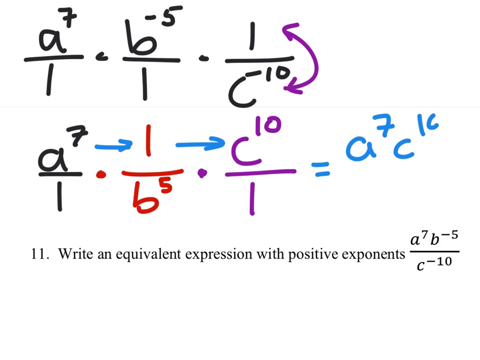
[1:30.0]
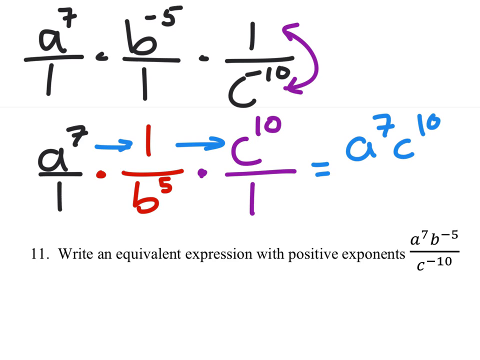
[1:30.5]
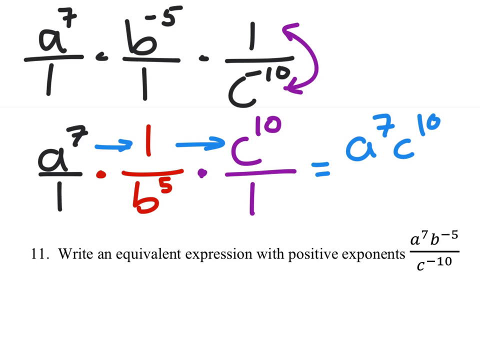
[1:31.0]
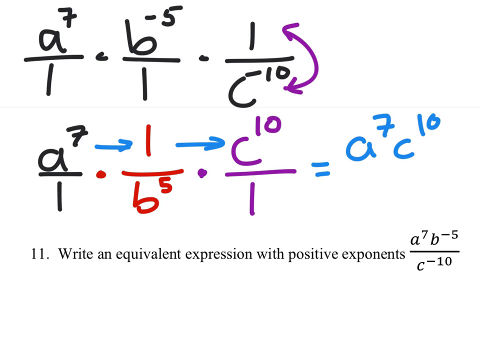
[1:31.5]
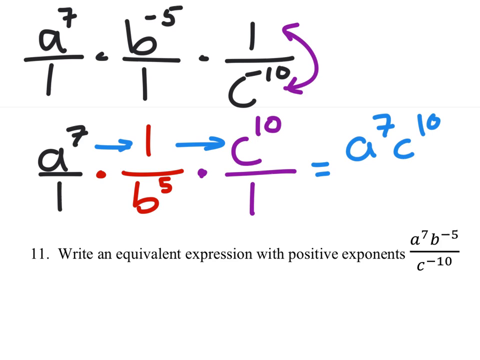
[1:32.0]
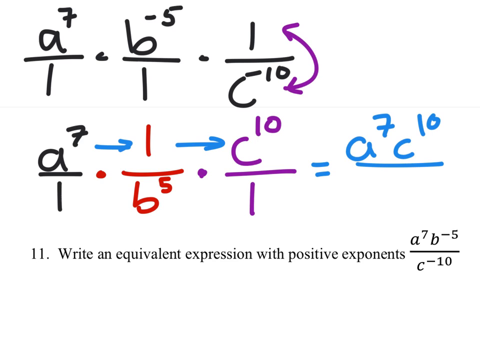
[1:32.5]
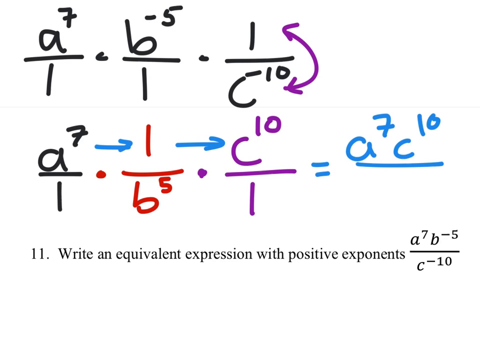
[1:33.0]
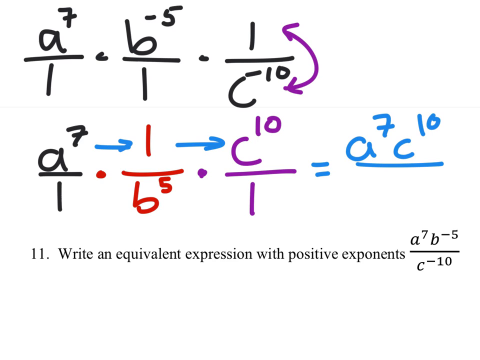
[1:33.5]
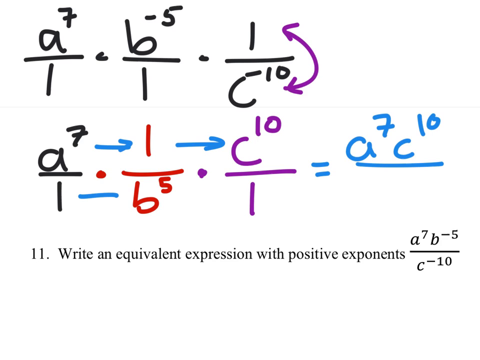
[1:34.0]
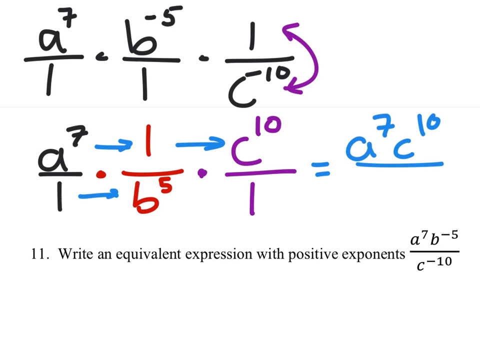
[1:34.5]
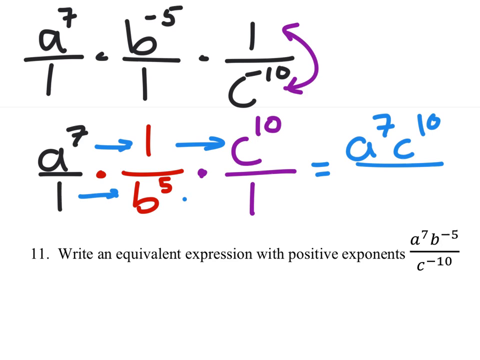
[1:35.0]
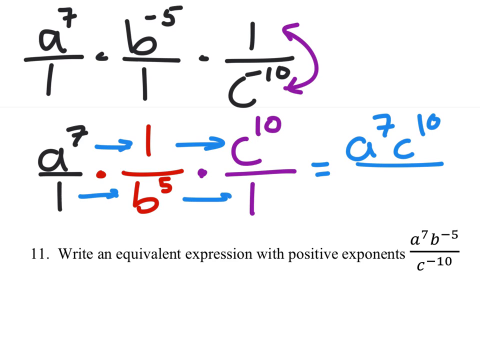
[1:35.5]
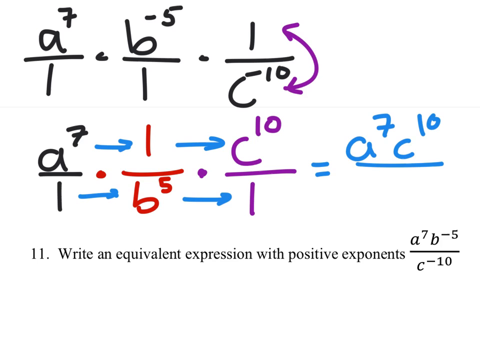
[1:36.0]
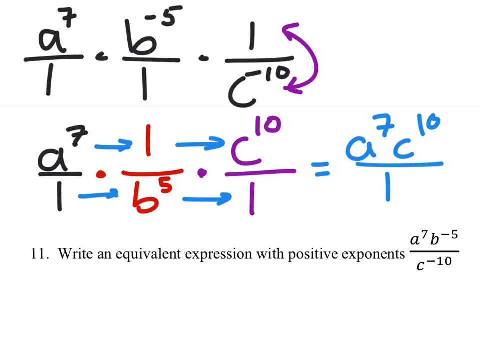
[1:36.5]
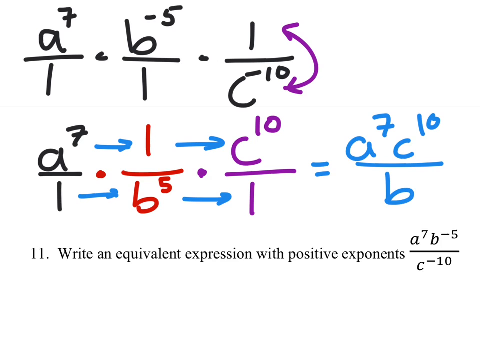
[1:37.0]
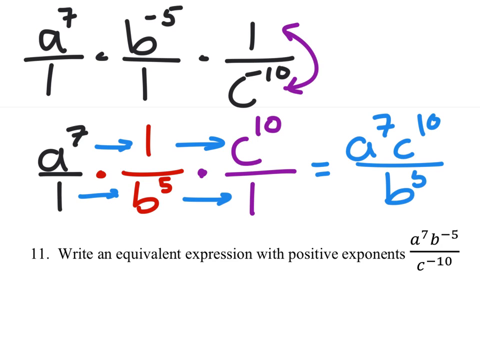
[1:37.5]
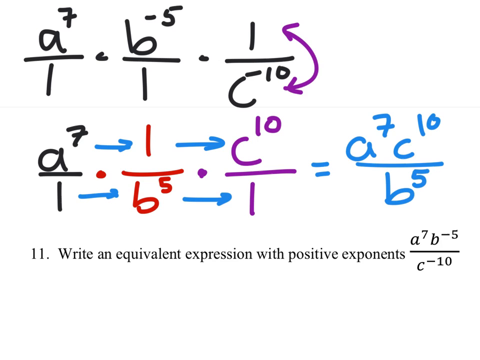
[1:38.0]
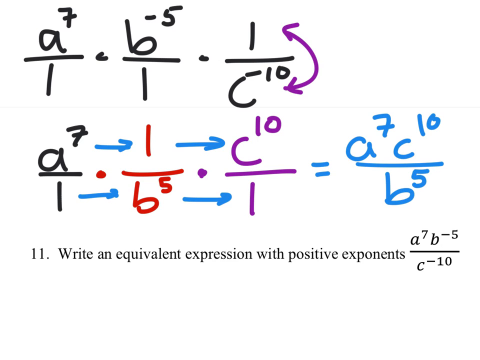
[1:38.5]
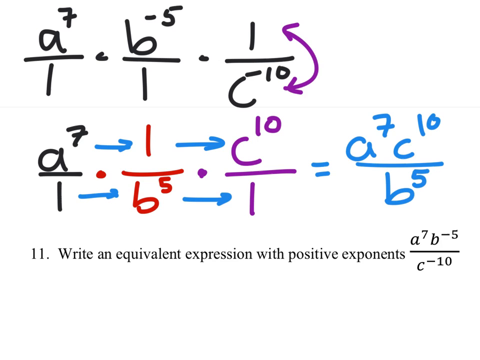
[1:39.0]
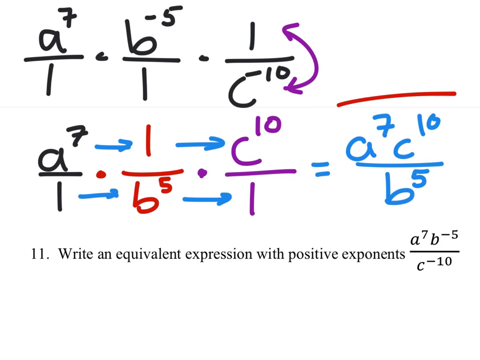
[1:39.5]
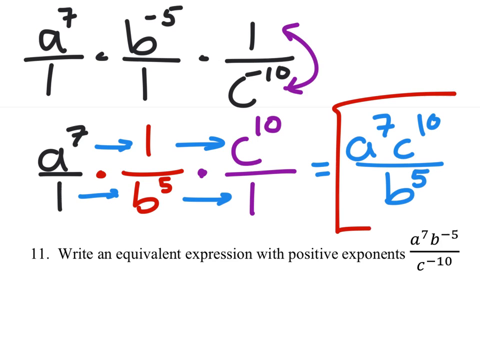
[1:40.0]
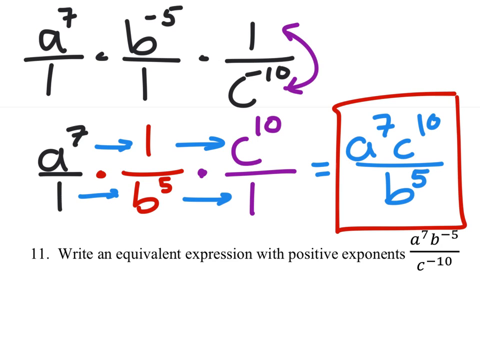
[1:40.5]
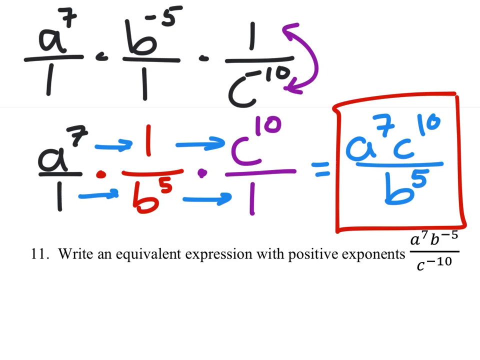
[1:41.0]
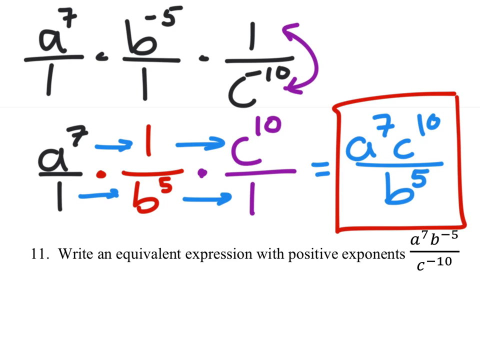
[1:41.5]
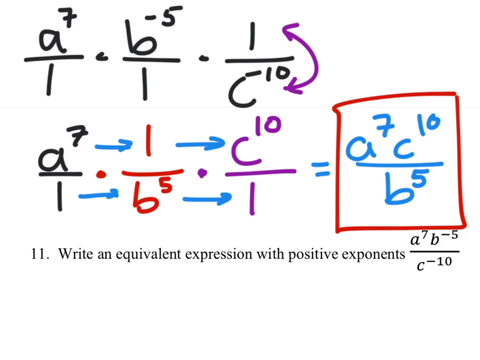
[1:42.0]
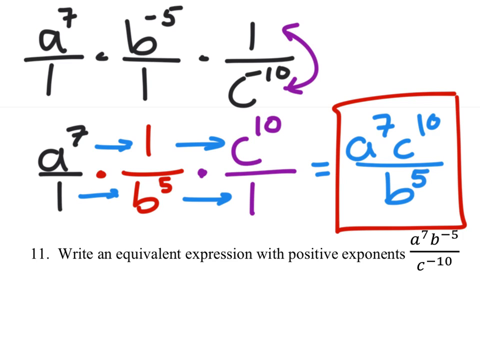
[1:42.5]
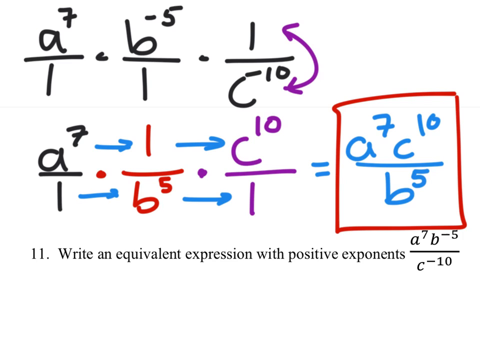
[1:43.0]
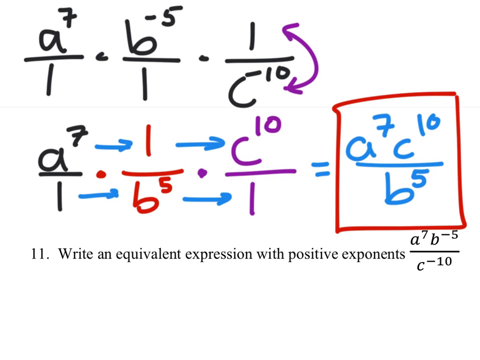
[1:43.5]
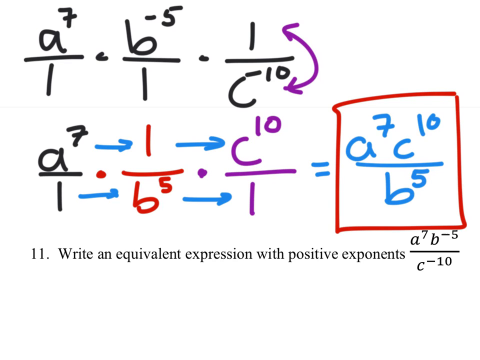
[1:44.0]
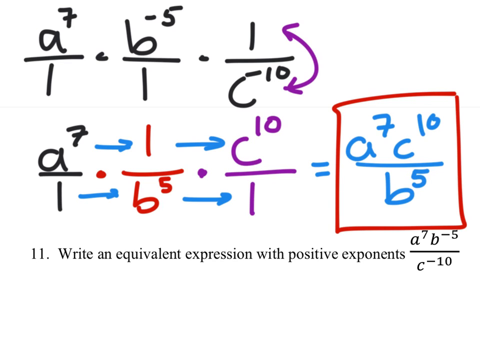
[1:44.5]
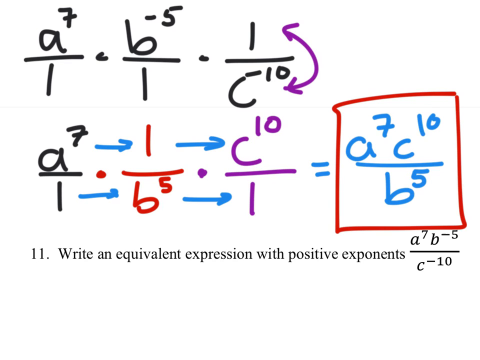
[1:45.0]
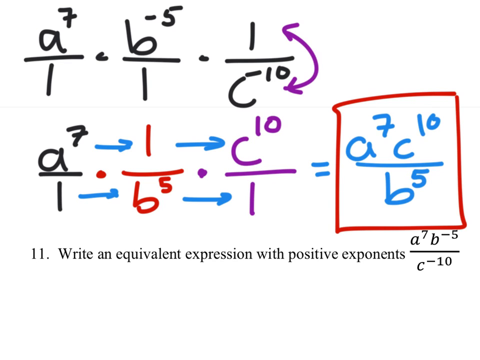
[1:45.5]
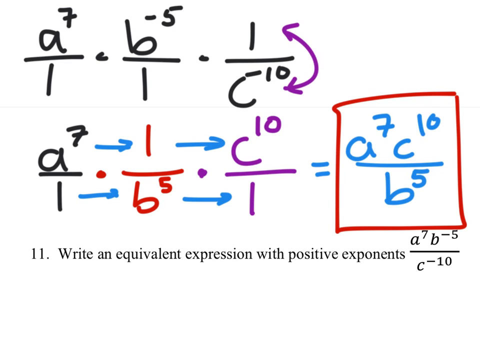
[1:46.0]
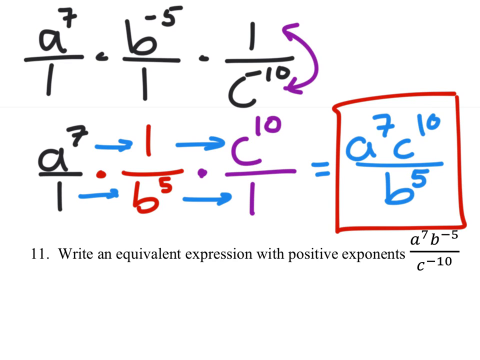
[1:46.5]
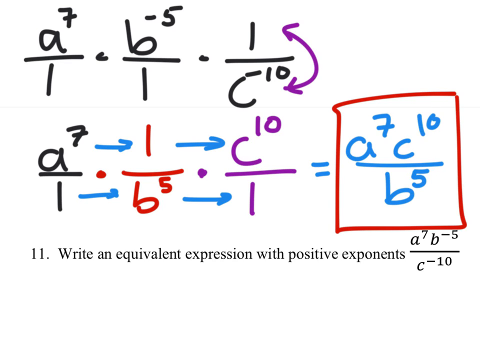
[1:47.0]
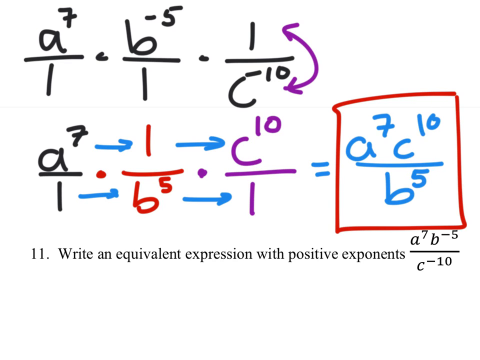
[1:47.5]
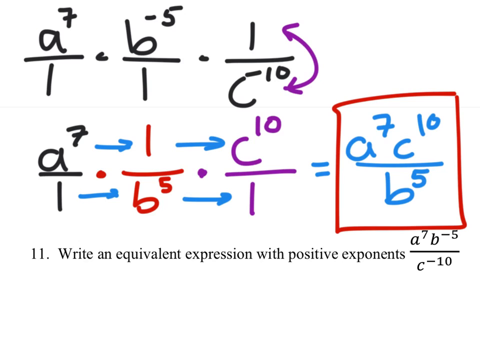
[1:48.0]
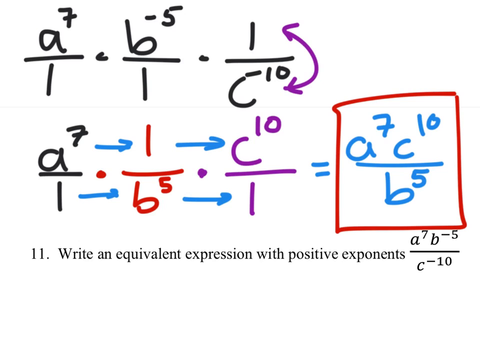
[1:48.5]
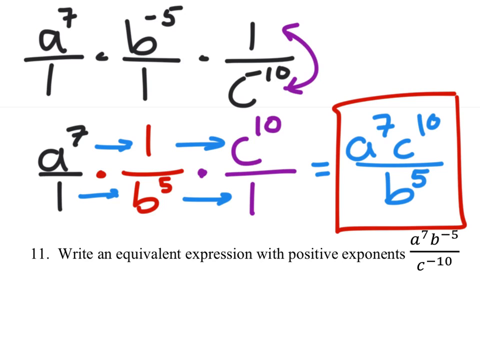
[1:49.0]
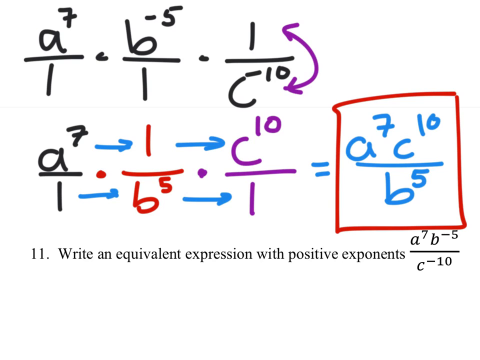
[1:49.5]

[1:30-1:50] A light blue marking pen adds more writing. It draws arrows from a to the exponent 7 divided by 1, an arrow in the middle, and from 1 divided by b to the exponent 5, plus an arrow on top of the purple dot. Next to c to the exponent 10 divided by 1 is an equals sign, followed by a to the exponent 7 c to the exponent 10, written in blue, with a division line also in blue. Lower down, arrows are drawn on the lower part by the 1 and b, and b to the exponent 5 is written, all in blue marker. A box is then drawn around a to the exponent 7 c to the exponent 10 divided by b to the exponent 5, possibly to mark the final result of the calculation.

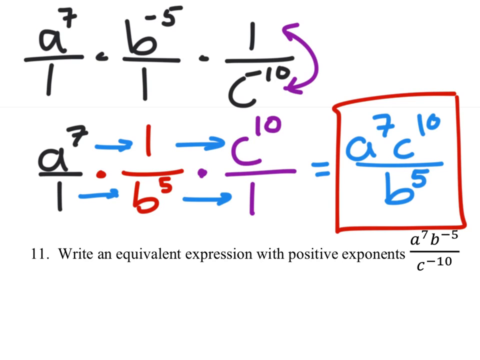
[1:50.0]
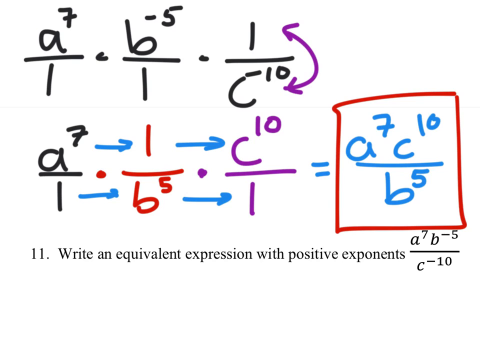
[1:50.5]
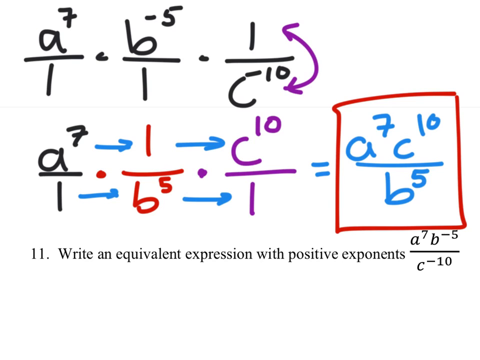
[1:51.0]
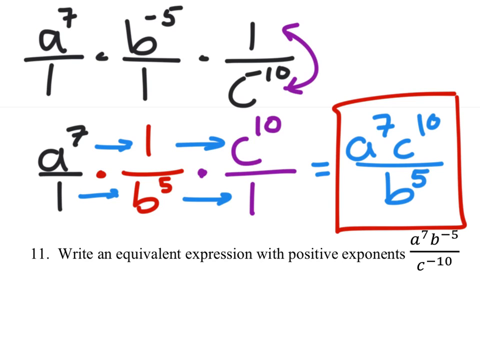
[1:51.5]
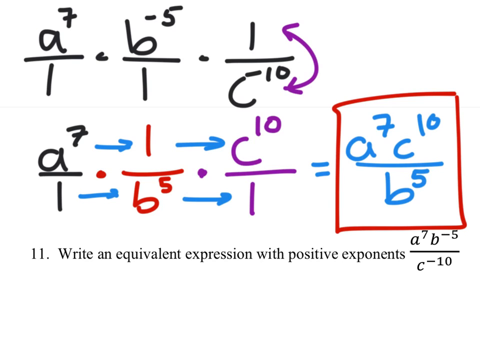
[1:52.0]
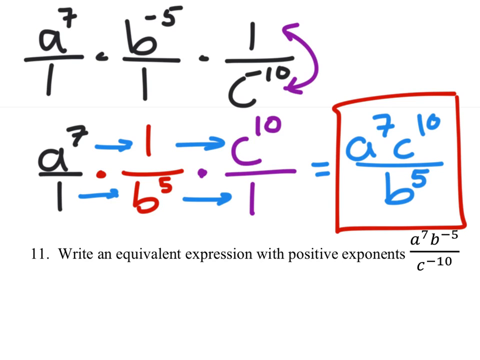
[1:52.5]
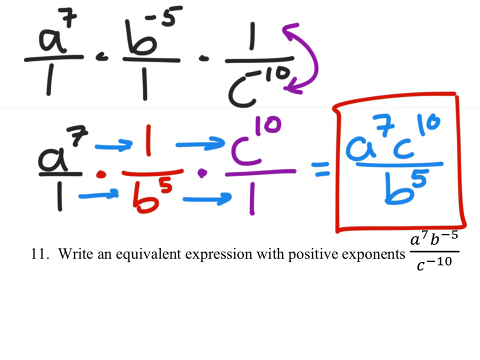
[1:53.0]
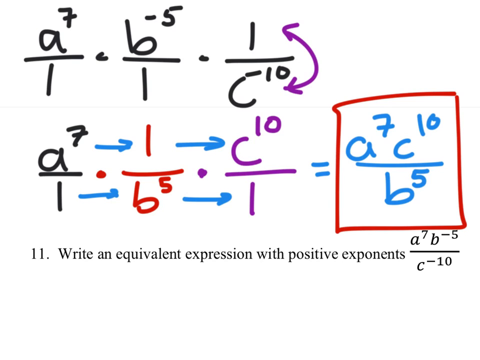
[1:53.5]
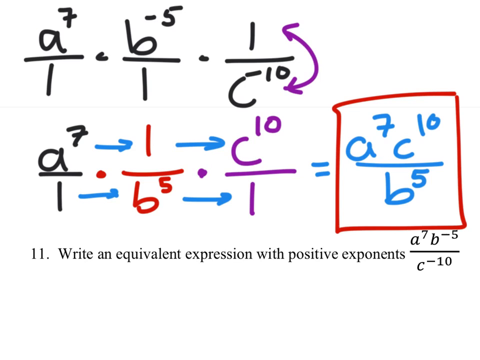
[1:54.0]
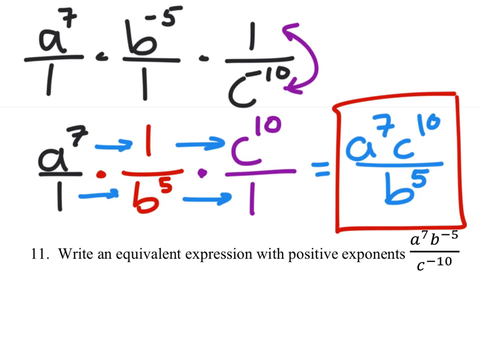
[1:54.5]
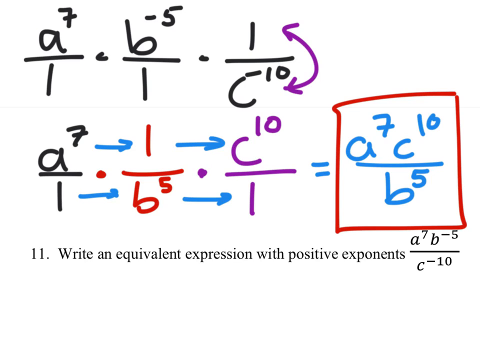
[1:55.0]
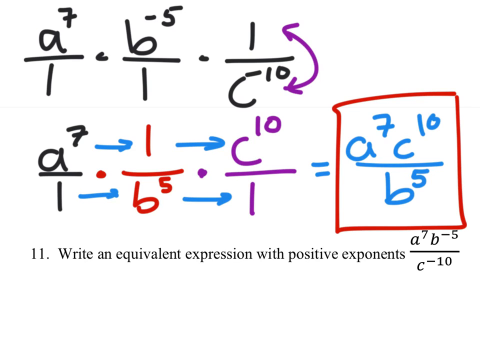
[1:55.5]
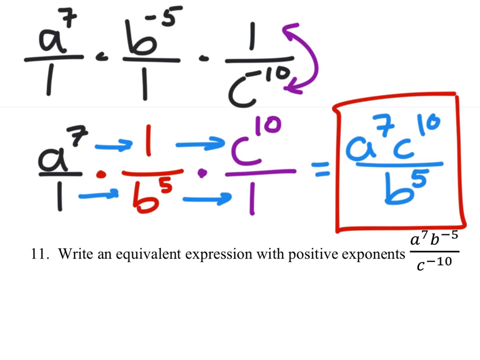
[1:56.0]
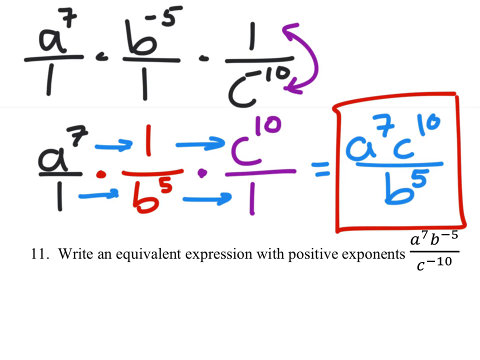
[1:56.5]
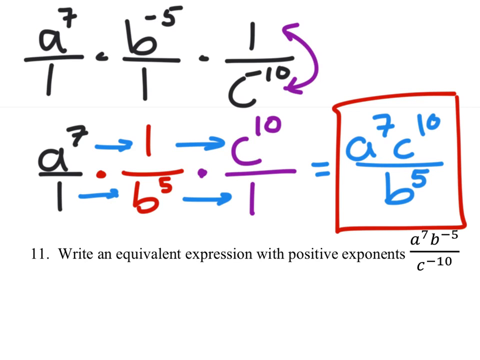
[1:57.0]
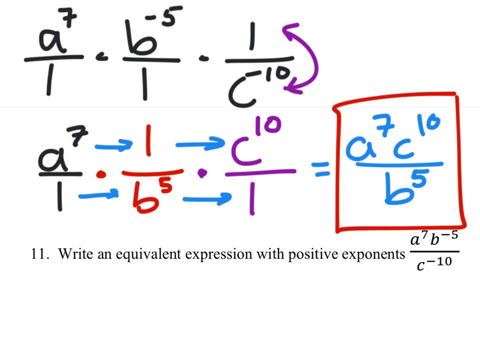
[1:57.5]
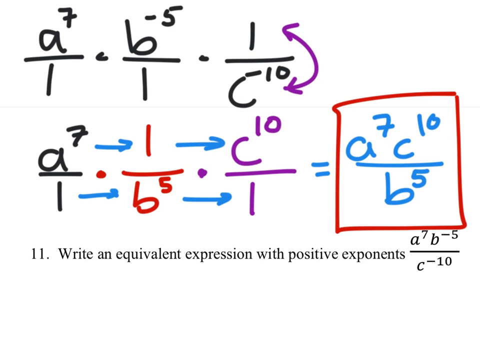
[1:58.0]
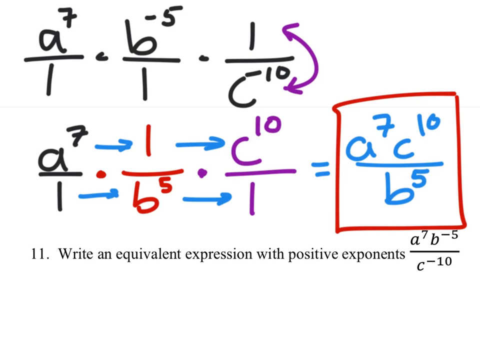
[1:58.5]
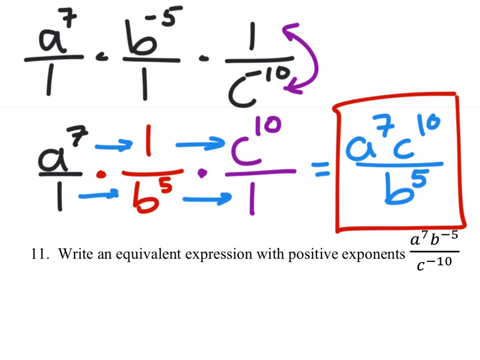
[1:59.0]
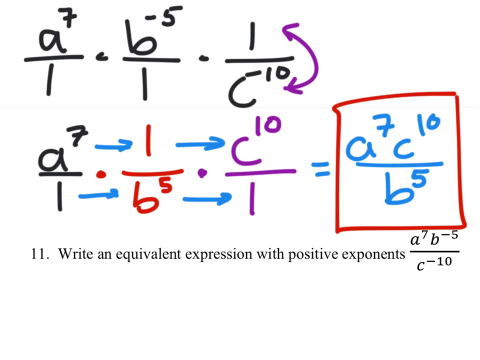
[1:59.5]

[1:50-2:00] The board shows writing in four colors: black, purple, blue and red. Red has been used to make a box around the blue writing. Purple has been used for a letter, numbers, a division sign, and a sign with two arrows. No hand or person appears; there is only the writing on the white board.